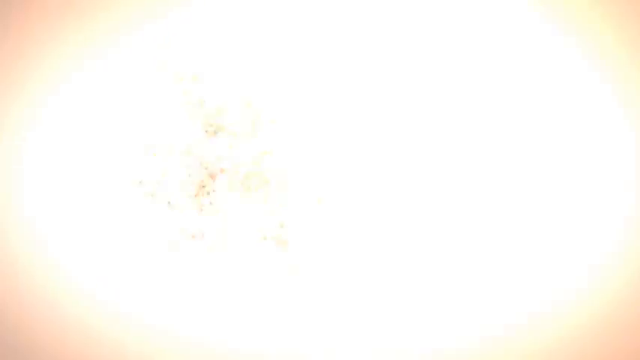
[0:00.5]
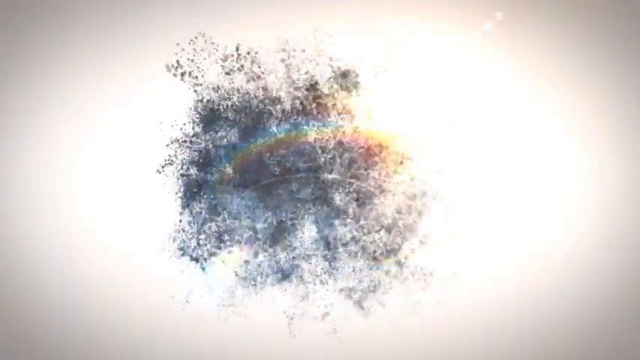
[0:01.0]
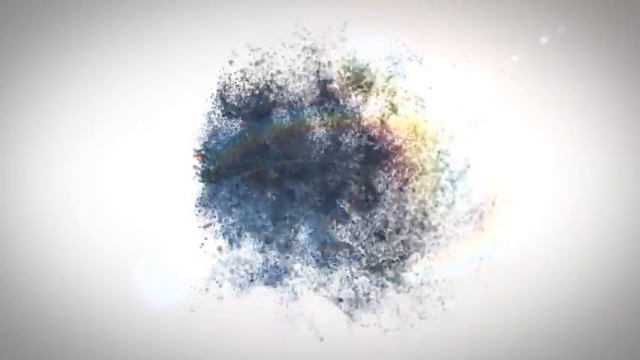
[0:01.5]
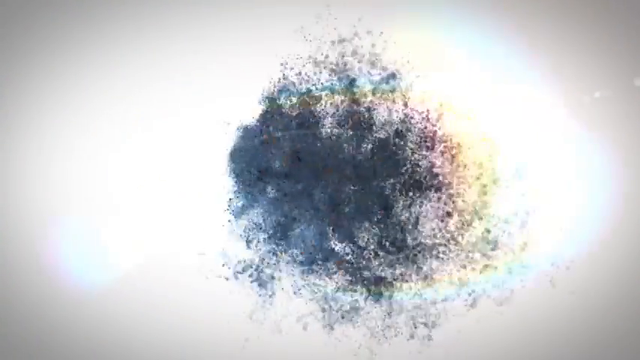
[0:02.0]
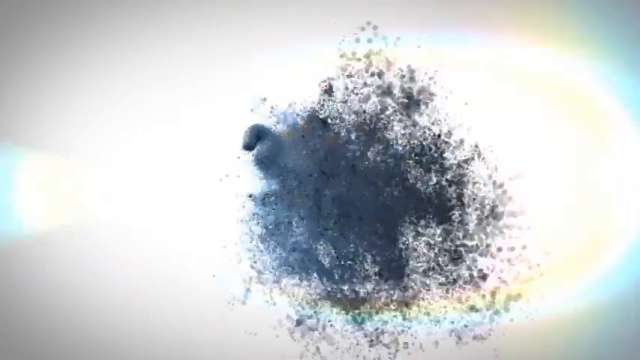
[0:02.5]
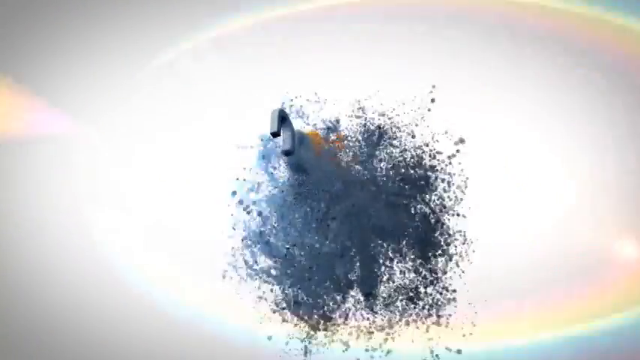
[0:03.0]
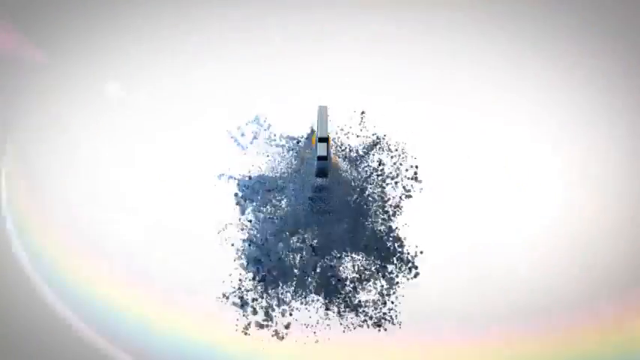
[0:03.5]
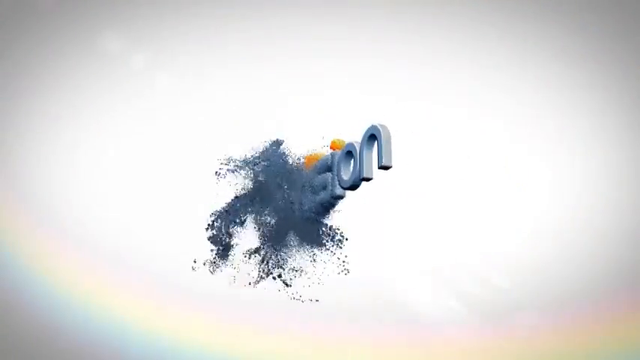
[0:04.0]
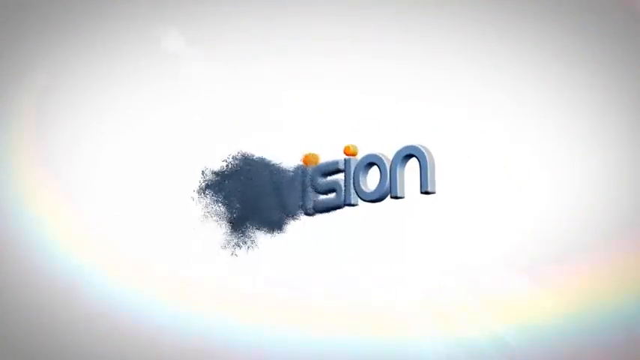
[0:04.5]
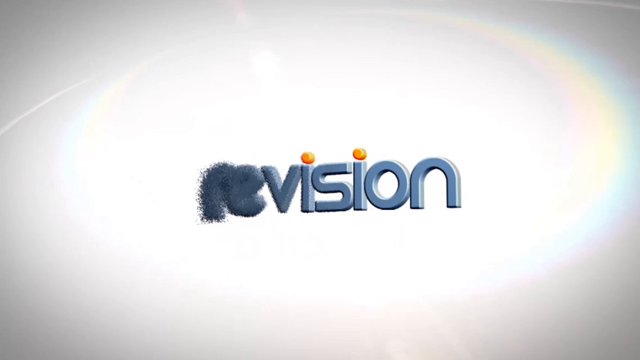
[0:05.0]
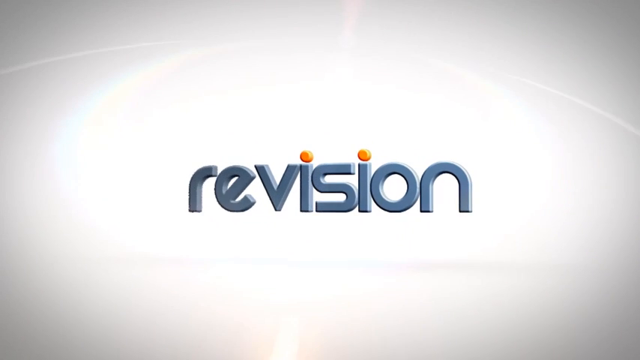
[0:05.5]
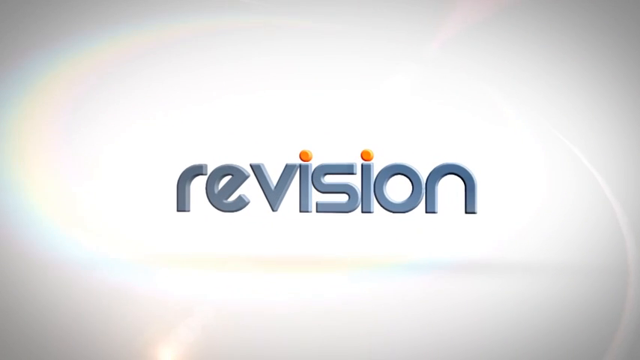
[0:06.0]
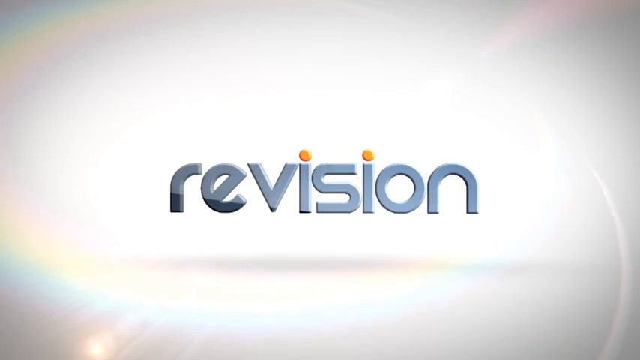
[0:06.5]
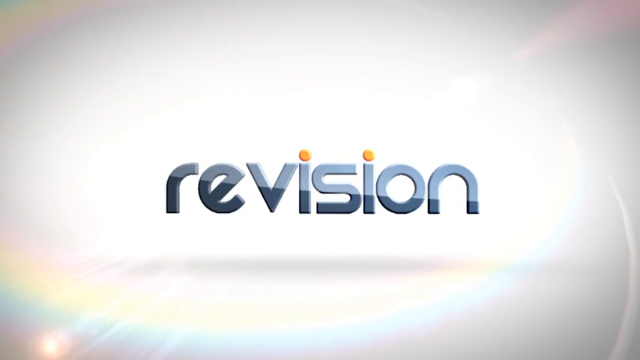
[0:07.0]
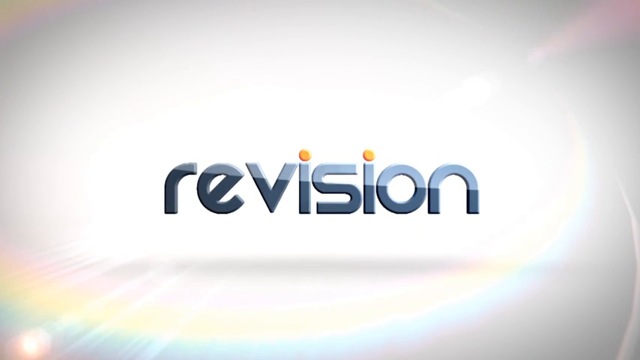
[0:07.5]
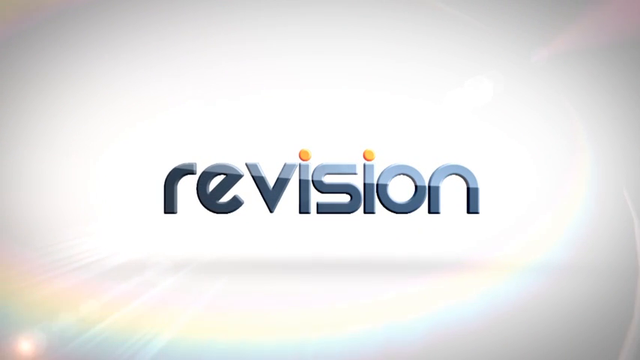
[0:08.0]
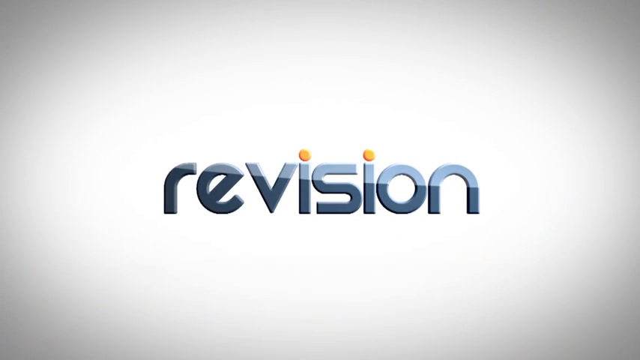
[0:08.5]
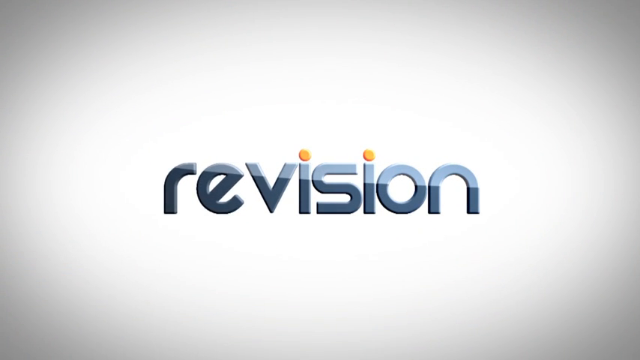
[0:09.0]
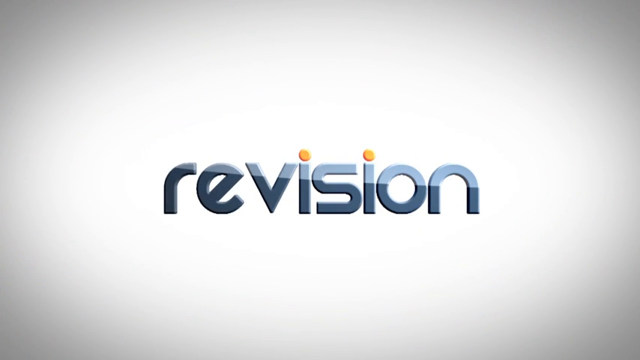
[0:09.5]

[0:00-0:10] At the beginning, what look like ashes, a million particles, circulate at high speed and form the word "revision". The word also moves in a circular motion until it settles into the correct position. "revision" is written in bold, small grey letters, and the letter i has an orange dot on top. A shadow moves up from the bottom of the word and stops after covering three quarters of the letters.